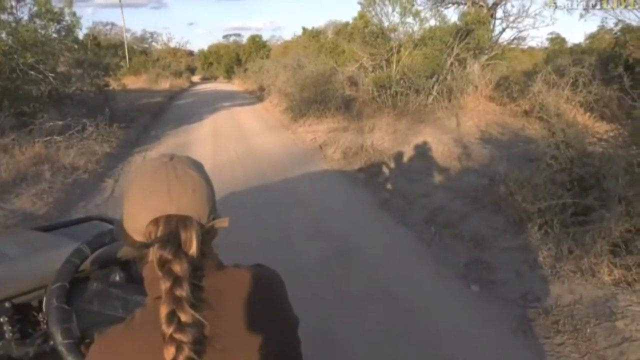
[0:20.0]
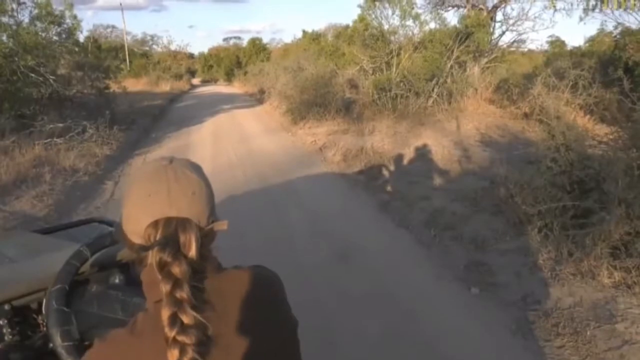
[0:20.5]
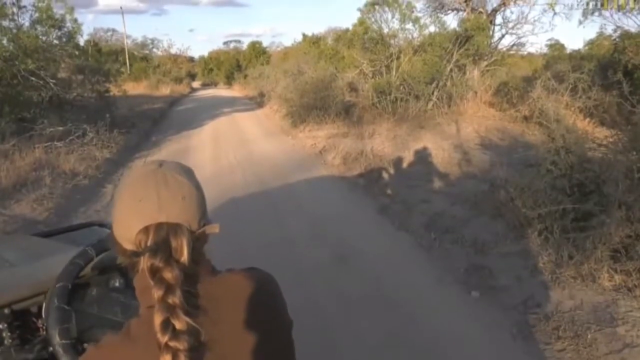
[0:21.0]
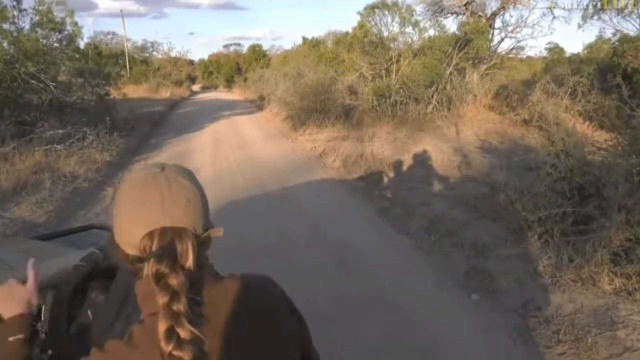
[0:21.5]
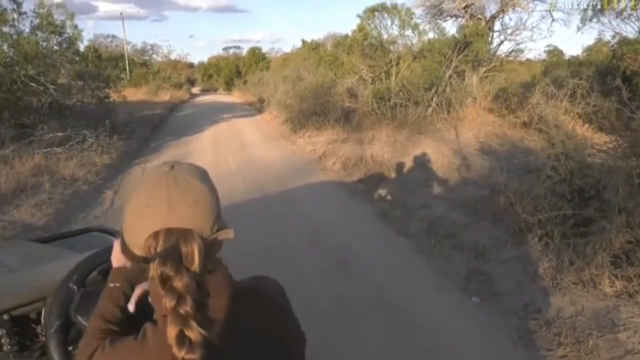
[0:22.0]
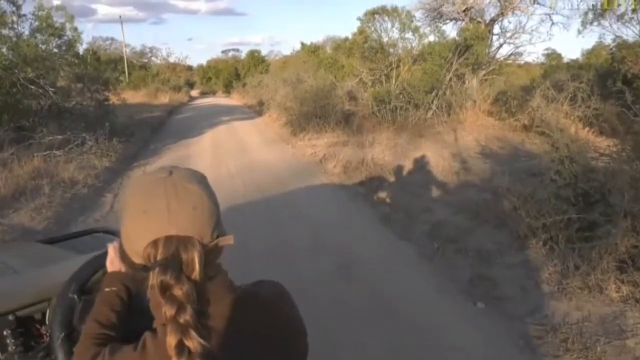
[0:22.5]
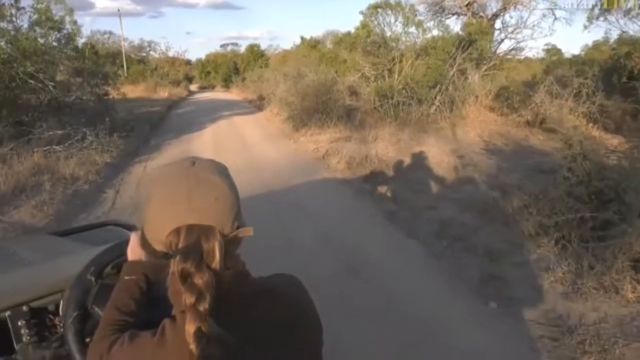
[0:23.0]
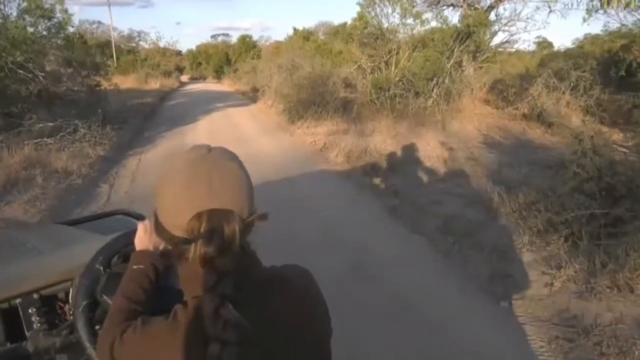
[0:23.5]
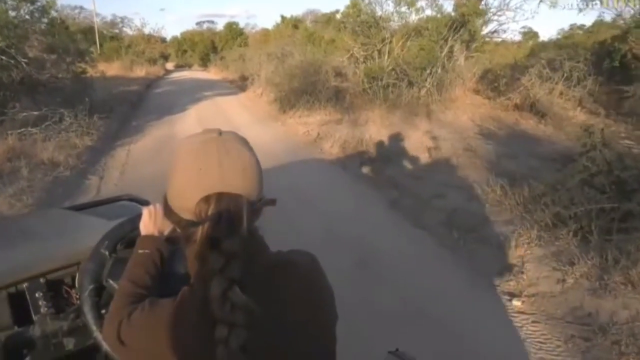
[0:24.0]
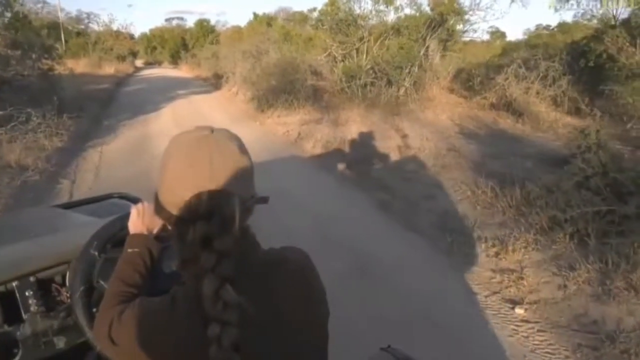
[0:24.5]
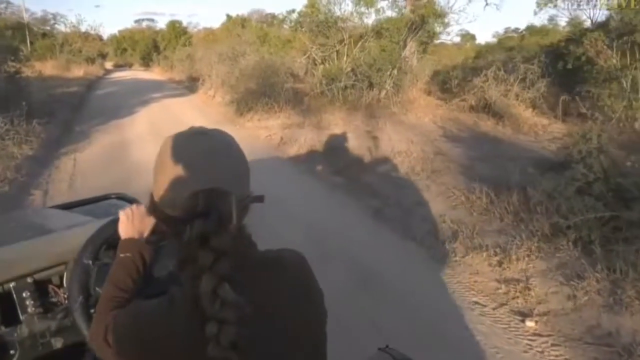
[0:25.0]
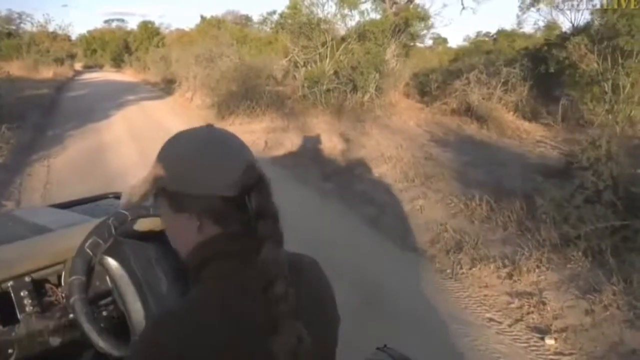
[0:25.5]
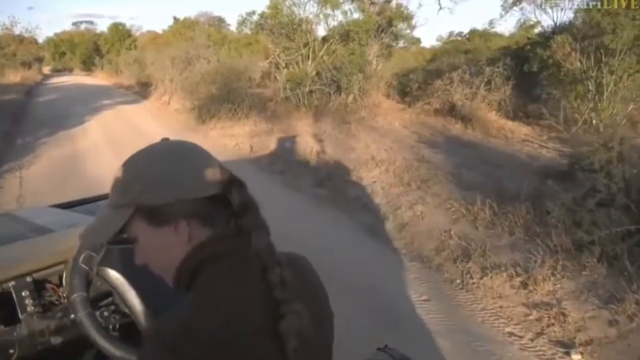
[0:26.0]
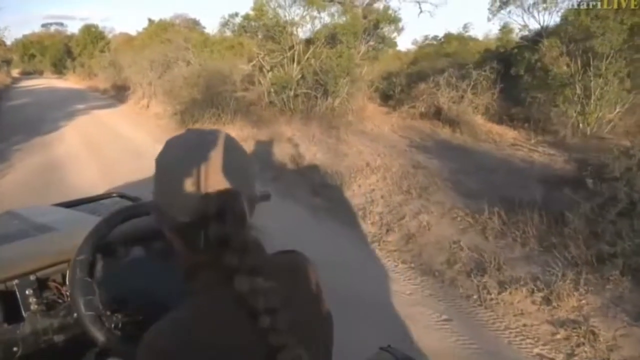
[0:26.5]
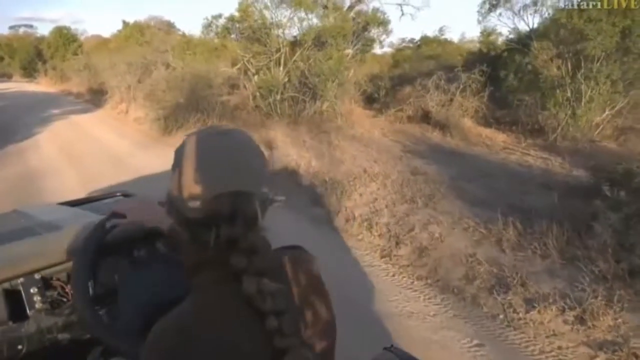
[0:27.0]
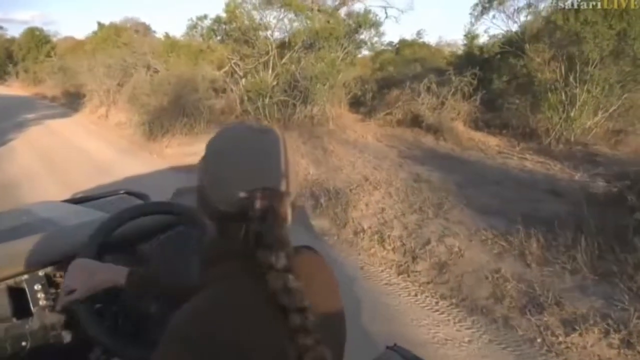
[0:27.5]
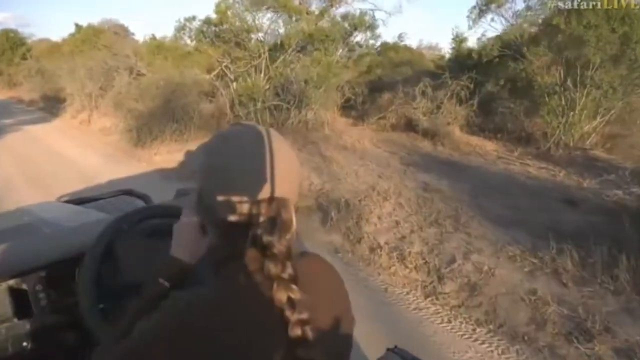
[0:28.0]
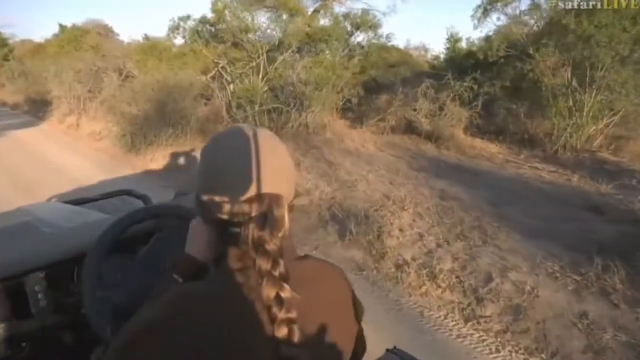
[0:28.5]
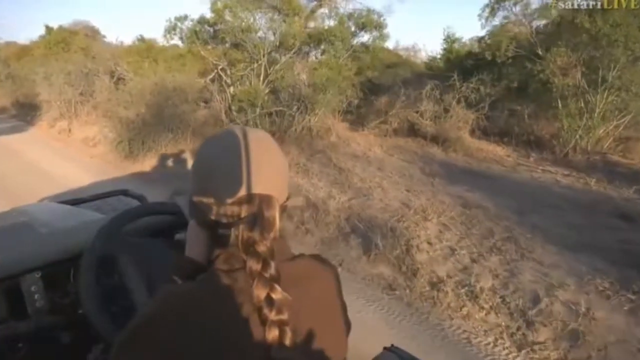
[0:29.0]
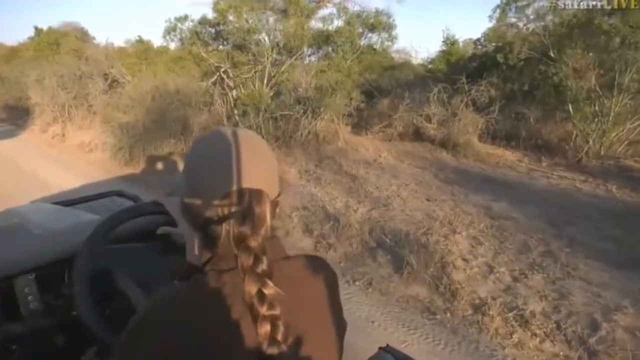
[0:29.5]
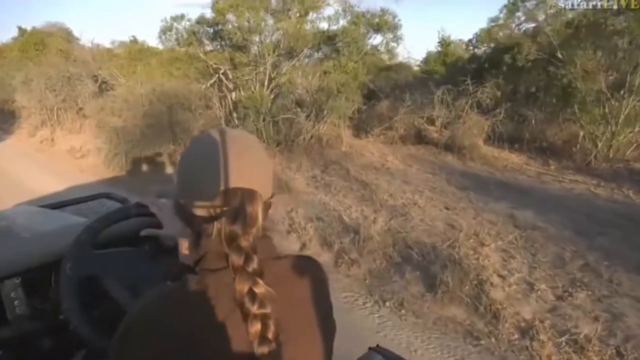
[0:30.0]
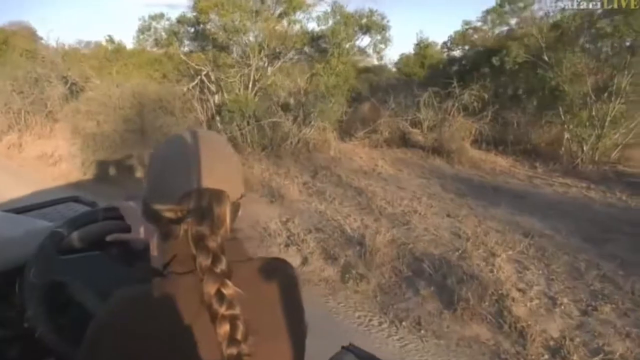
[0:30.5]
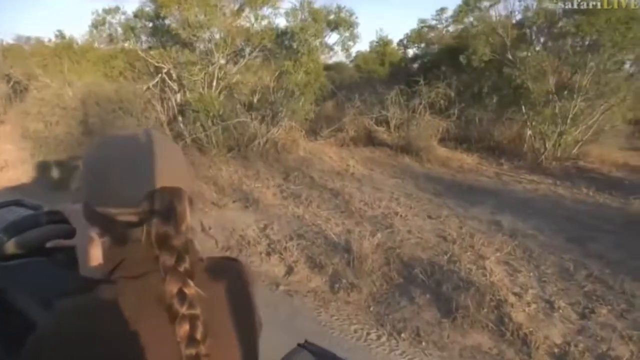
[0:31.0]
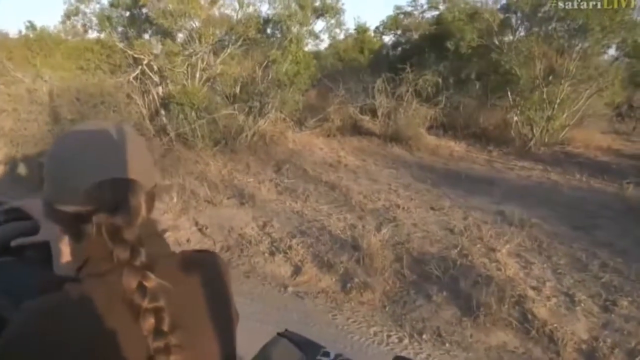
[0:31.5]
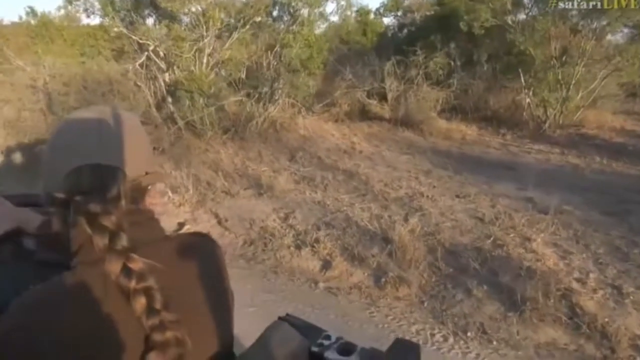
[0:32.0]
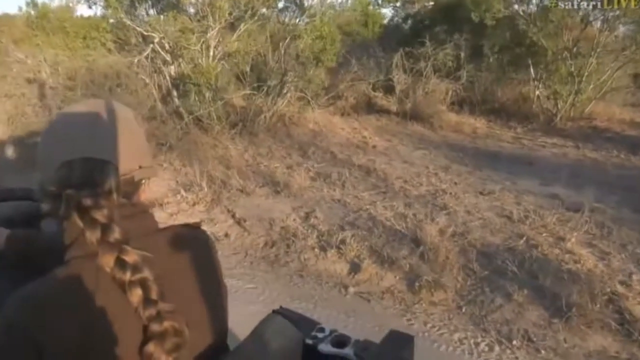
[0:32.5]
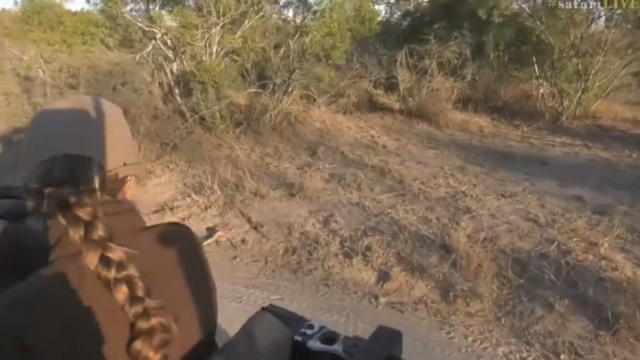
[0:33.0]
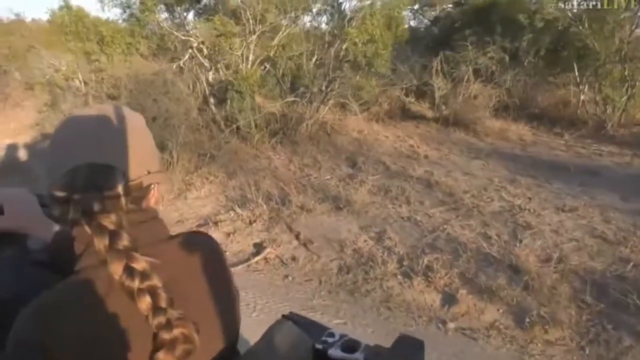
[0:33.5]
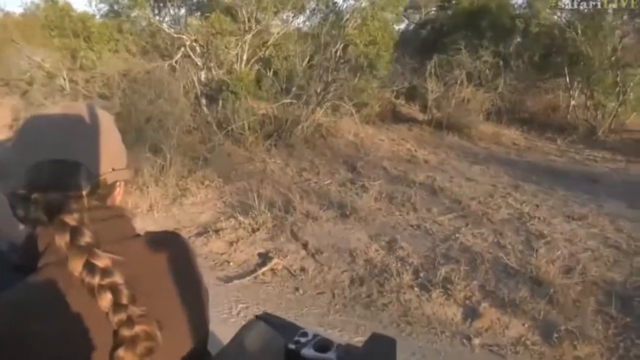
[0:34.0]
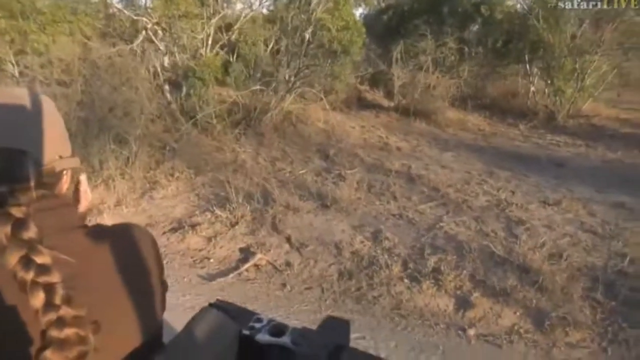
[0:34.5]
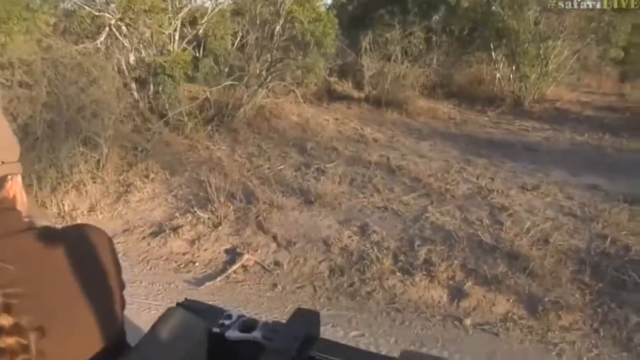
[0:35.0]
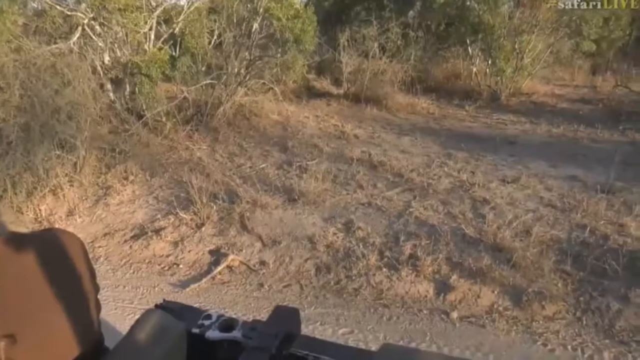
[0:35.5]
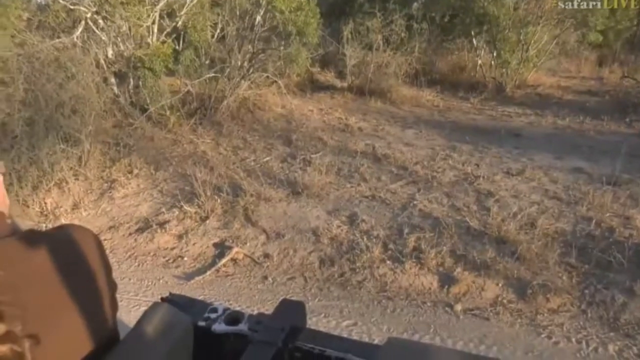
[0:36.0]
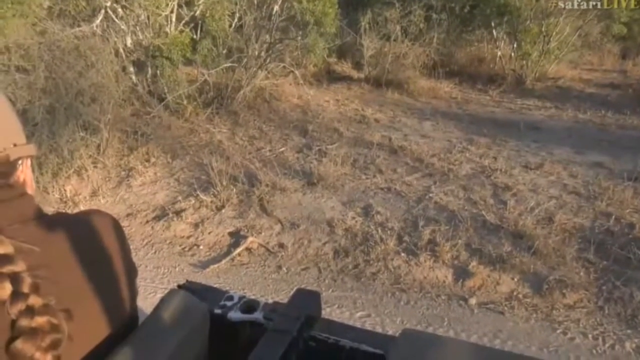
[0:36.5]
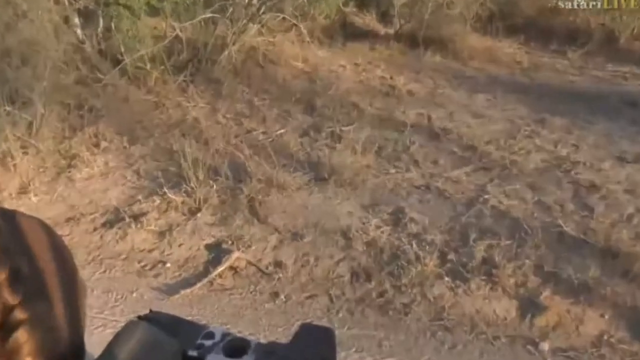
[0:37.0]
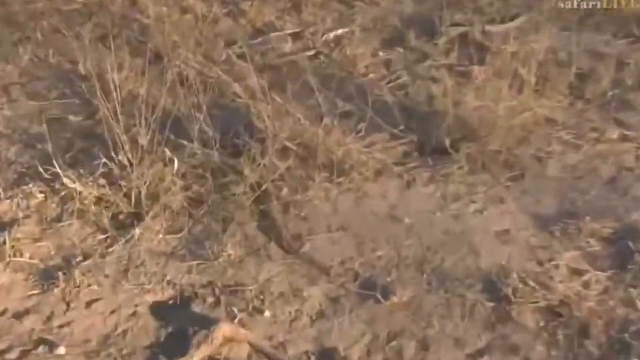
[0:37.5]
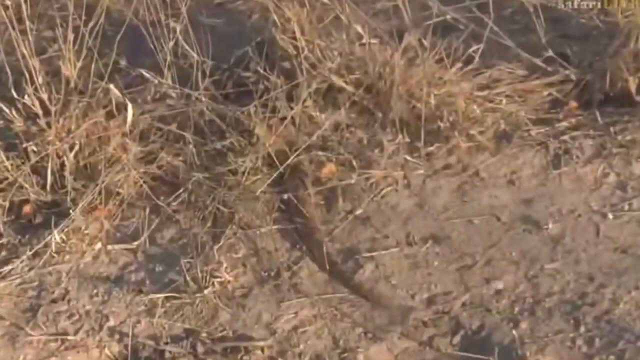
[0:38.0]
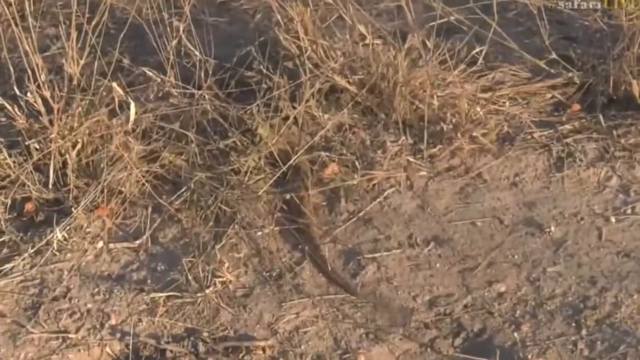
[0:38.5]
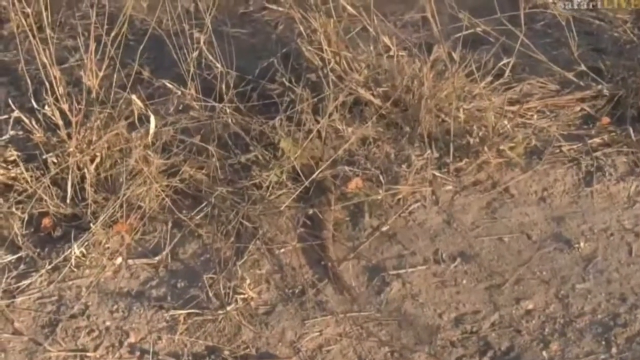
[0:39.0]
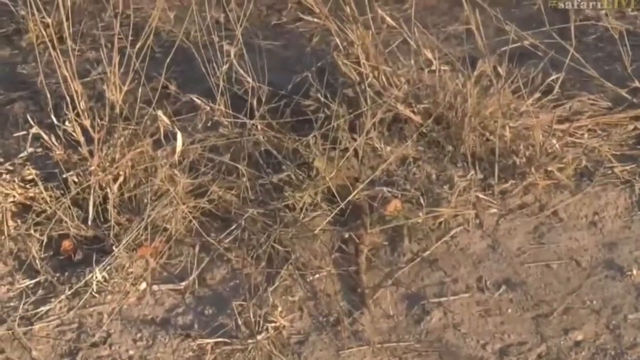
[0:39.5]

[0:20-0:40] The Jeep is stationary, and the shot is still from behind and slightly above the woman's head, looking directly down a dirt road that runs straight away from the camera. There are bushes and shrubs on either side of the road. On the right-hand side of the image, the shadow of the Jeep and of the person filming the woman is visible. The woman starts to speak into a walkie-talkie, then turns the steering wheel to the right and the Jeep starts to move so she can continue down the track. She keeps speaking into the walkie-talkie while looking at the ground on the right-hand side of the track. The camera zooms in, revealing that she is still watching the snake, and the end of its tail disappears into a hole in the ground.